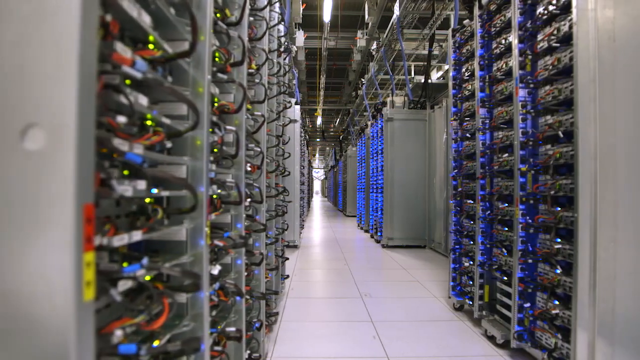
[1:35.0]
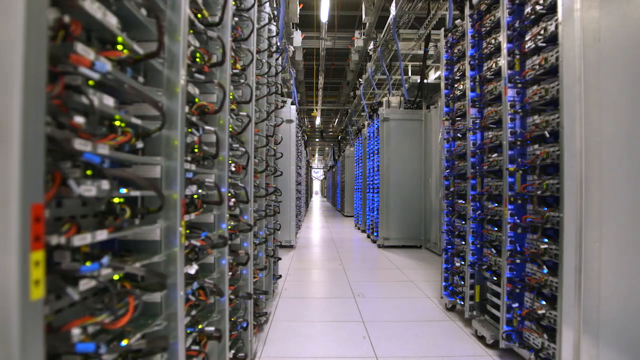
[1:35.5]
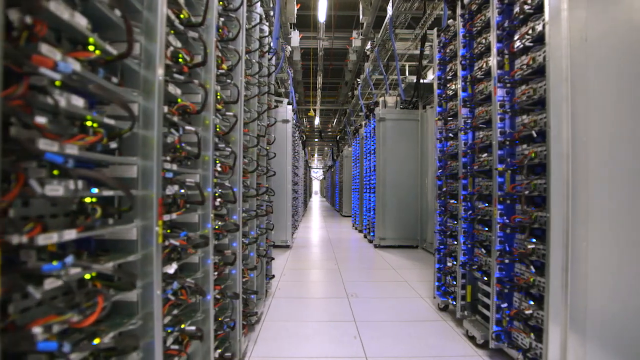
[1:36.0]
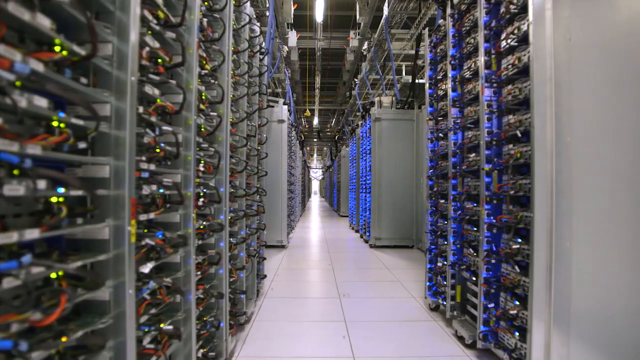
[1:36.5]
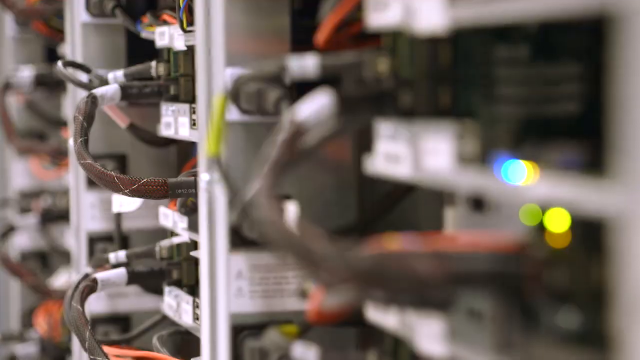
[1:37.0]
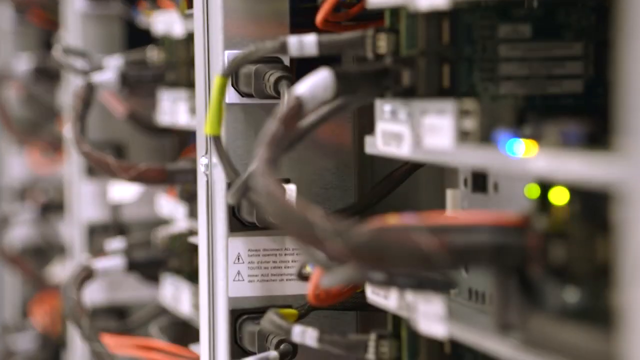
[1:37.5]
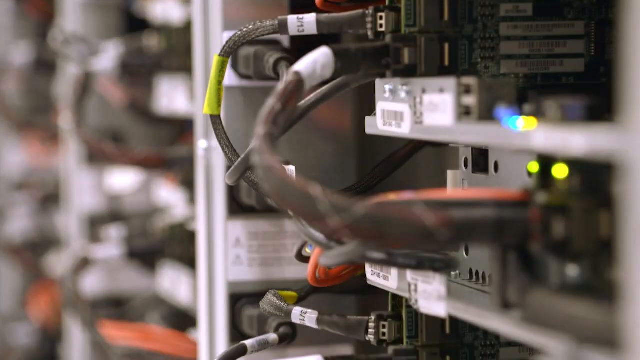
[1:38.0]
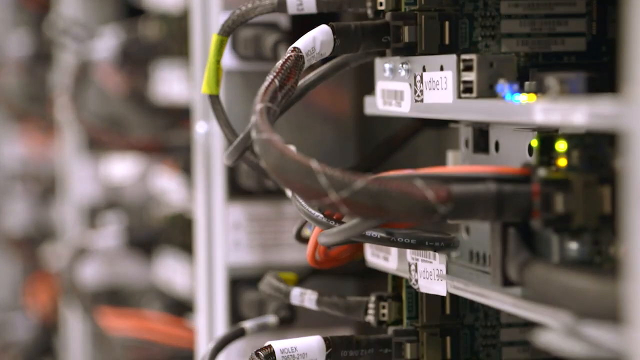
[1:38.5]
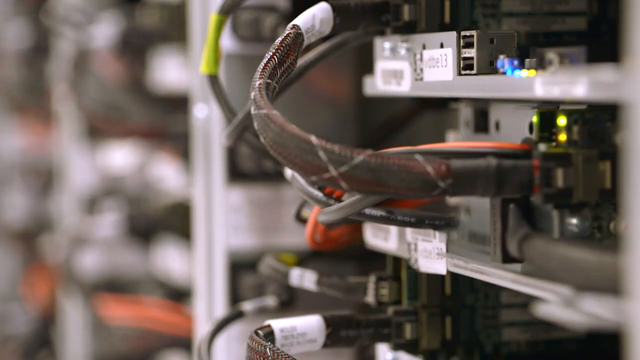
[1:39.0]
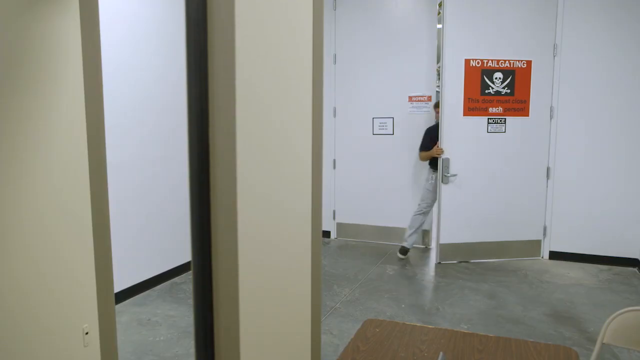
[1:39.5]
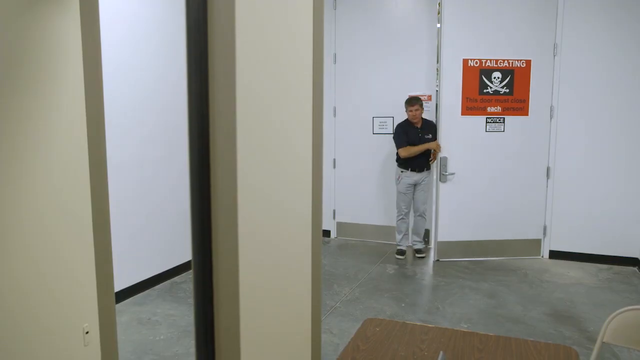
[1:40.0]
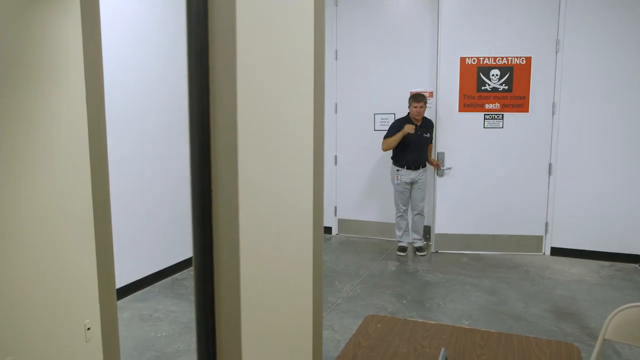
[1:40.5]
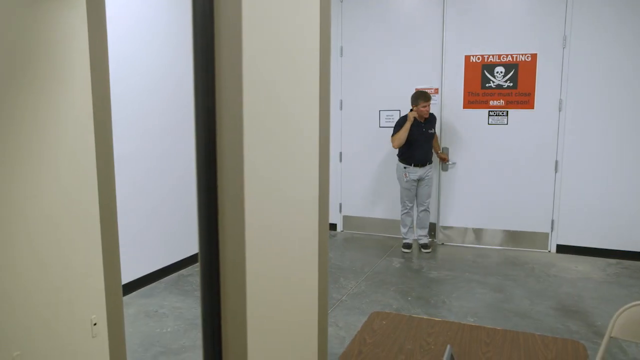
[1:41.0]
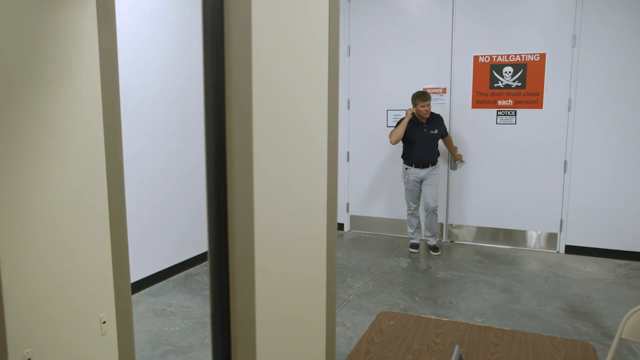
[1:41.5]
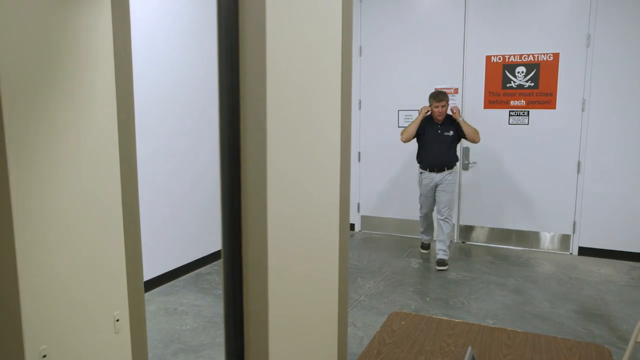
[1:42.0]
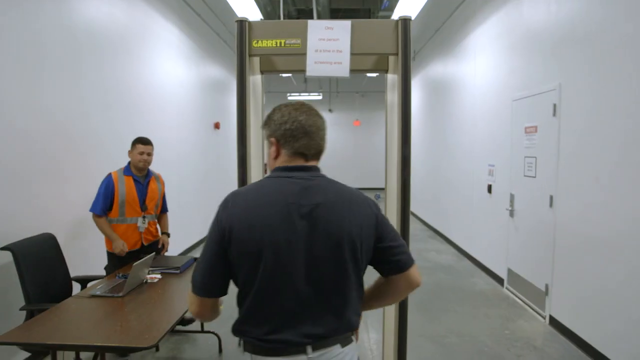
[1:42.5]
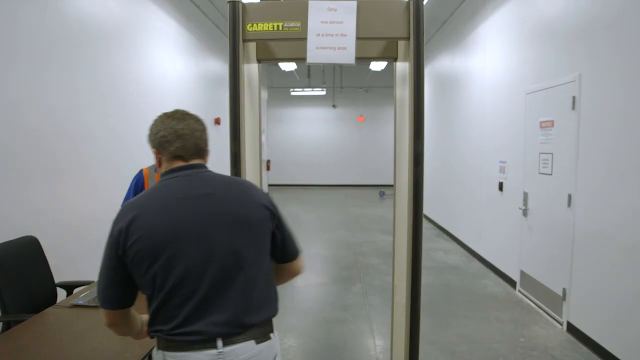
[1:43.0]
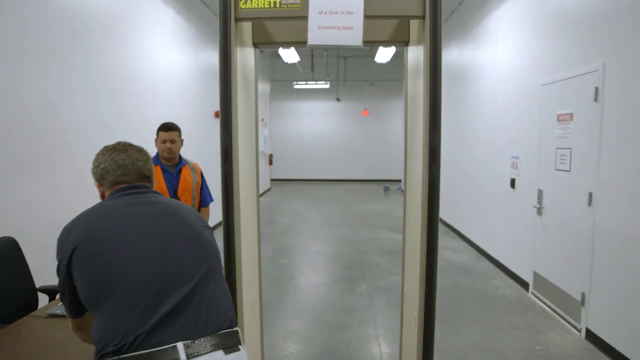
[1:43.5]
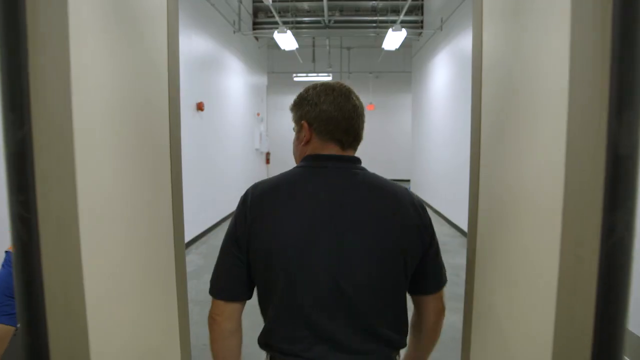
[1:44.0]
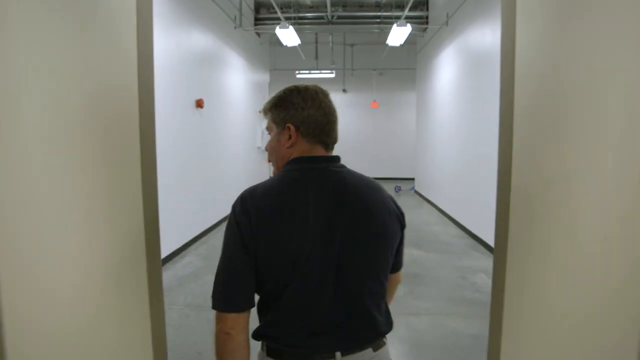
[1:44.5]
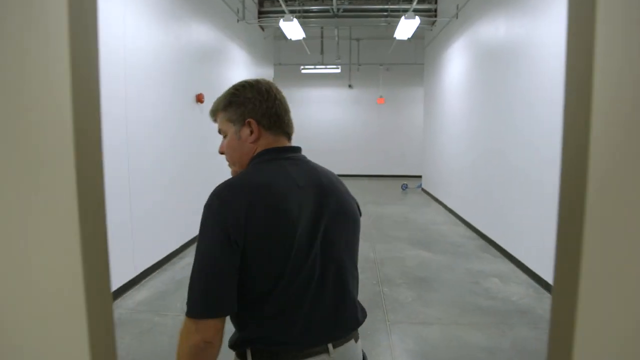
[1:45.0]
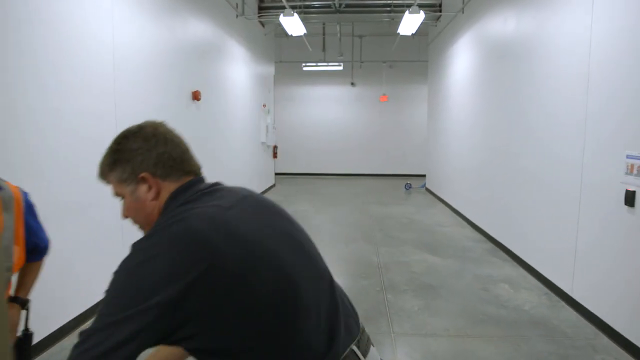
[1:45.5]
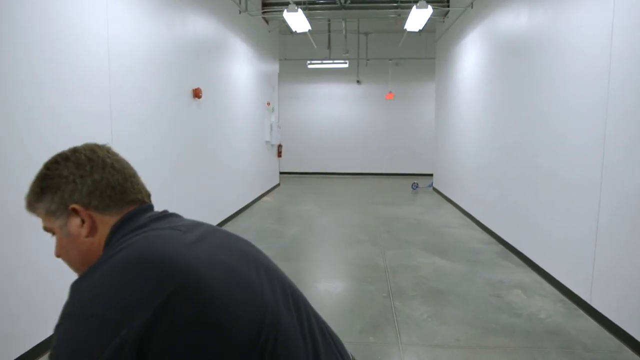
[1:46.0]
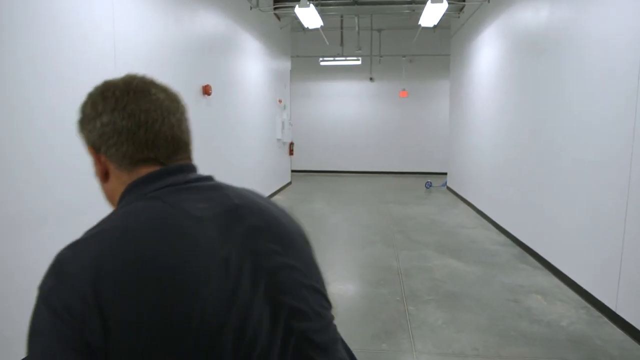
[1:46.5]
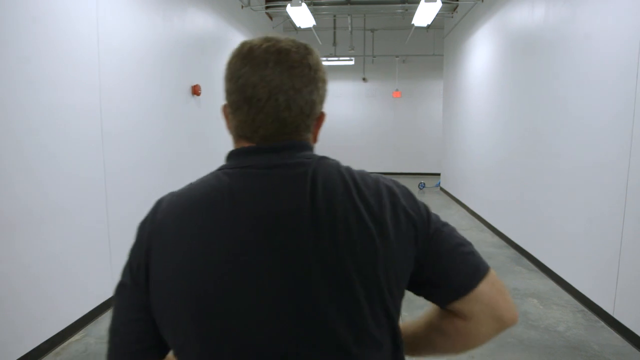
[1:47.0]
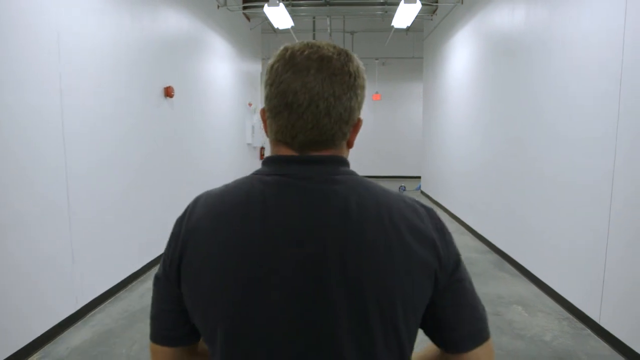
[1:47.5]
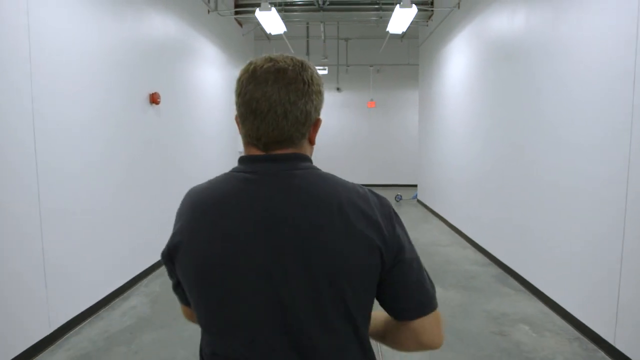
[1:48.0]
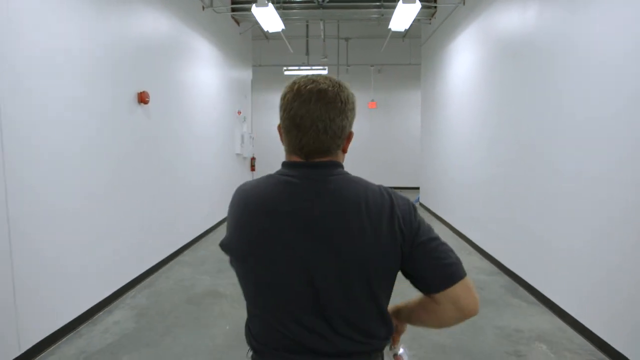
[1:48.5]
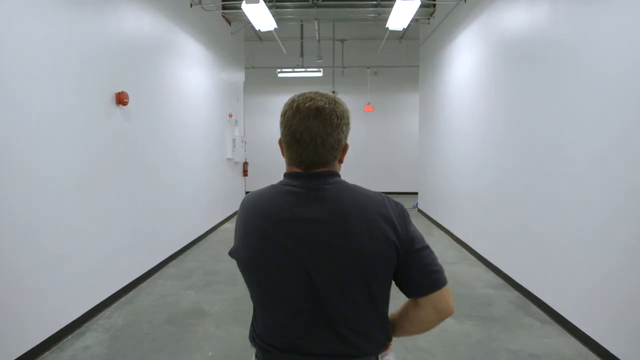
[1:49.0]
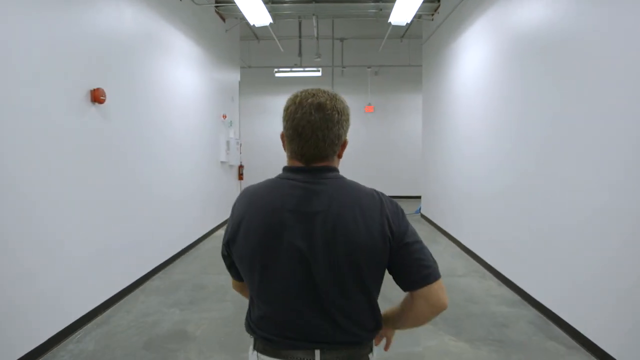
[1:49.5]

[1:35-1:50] The same room remains in view, with what appear to be various modems and lots of wires and technology. The man walks through a door bearing a sign that says "no tailgating", indicating only one person may enter at a time. He goes through a metal detector, puts all his things down, and then walks down a long hallway, apparently heading to the next area. Everything is empty, the walls are white, and the place looks cold.